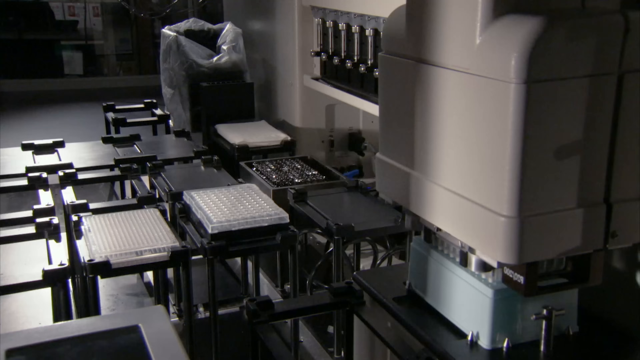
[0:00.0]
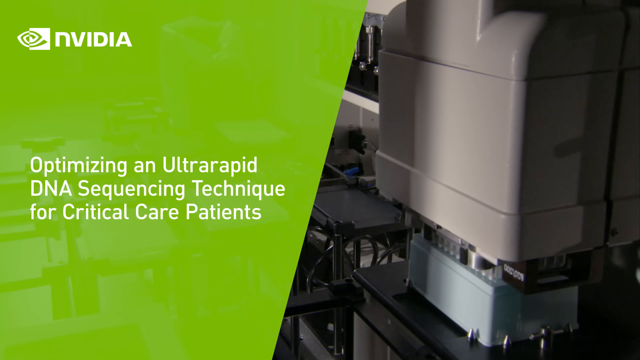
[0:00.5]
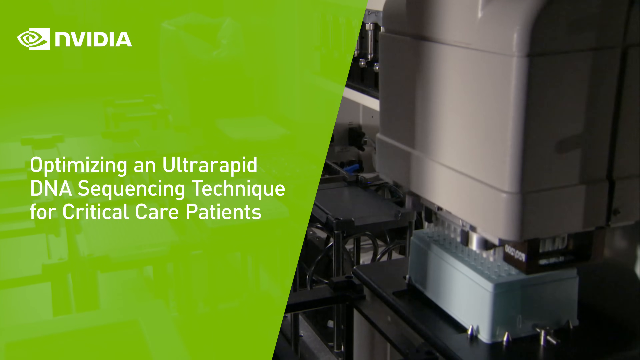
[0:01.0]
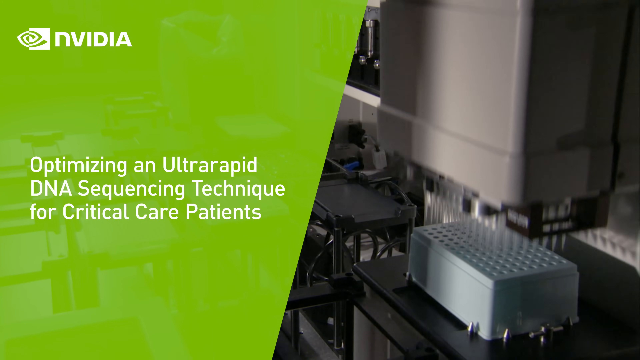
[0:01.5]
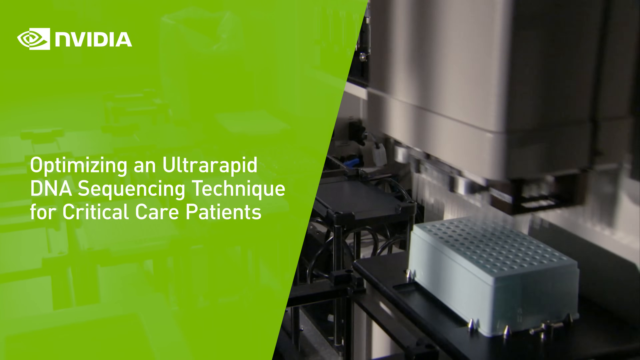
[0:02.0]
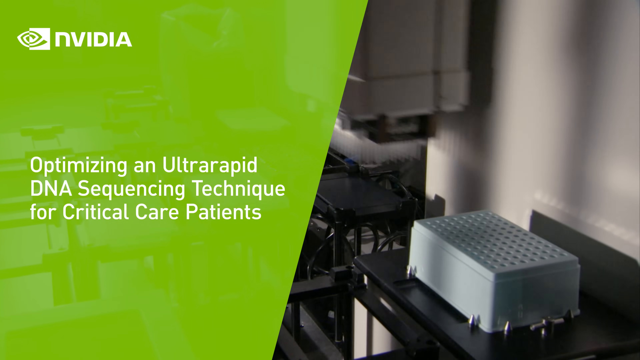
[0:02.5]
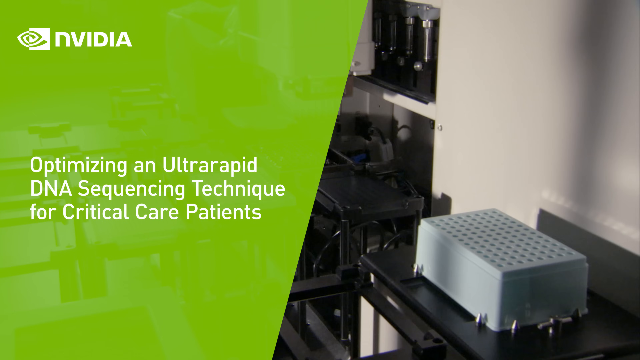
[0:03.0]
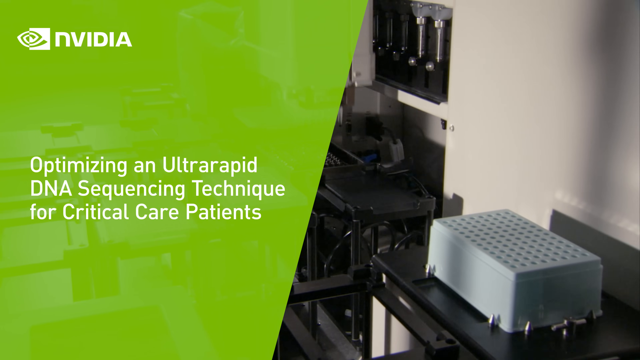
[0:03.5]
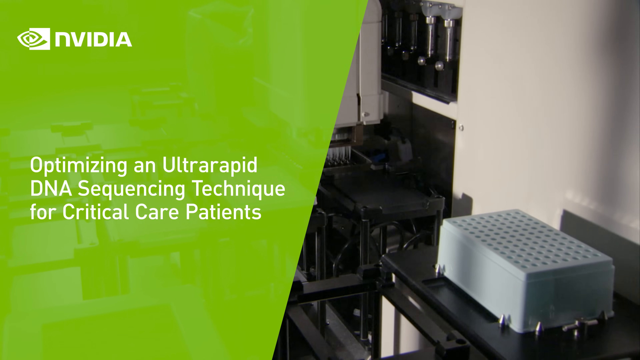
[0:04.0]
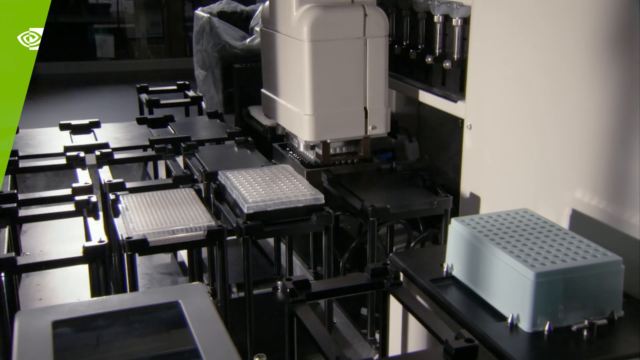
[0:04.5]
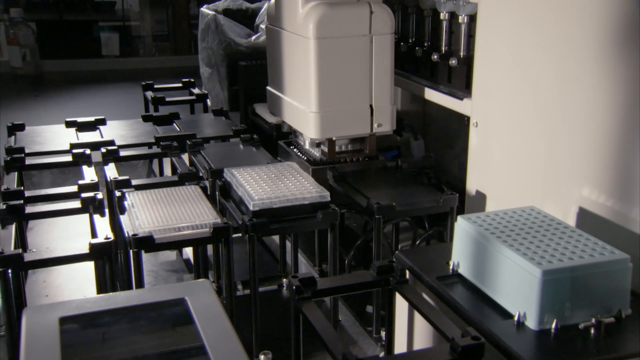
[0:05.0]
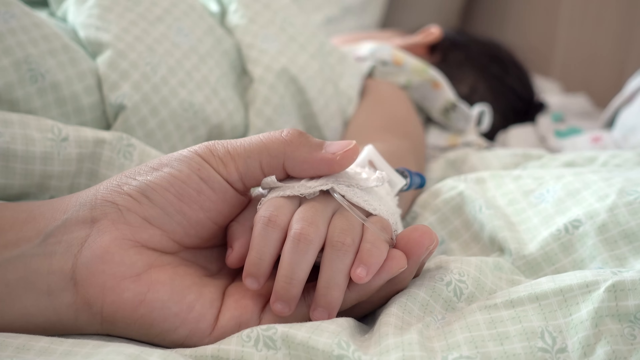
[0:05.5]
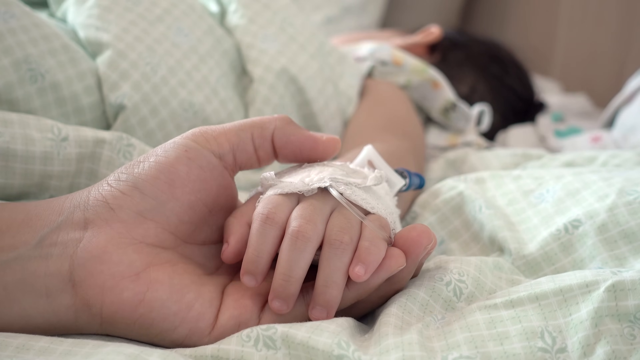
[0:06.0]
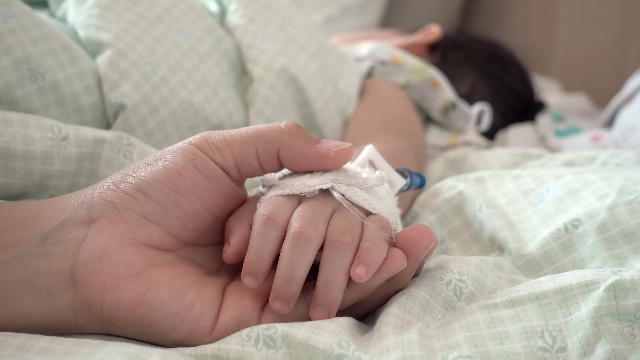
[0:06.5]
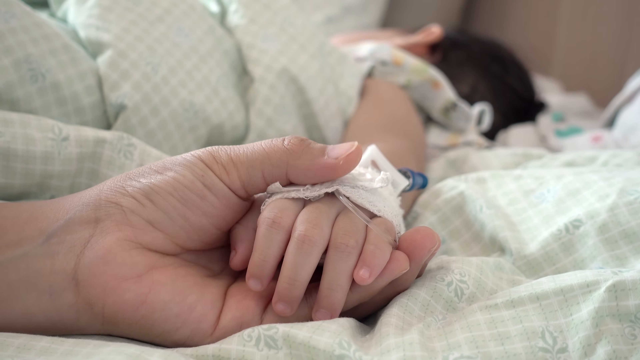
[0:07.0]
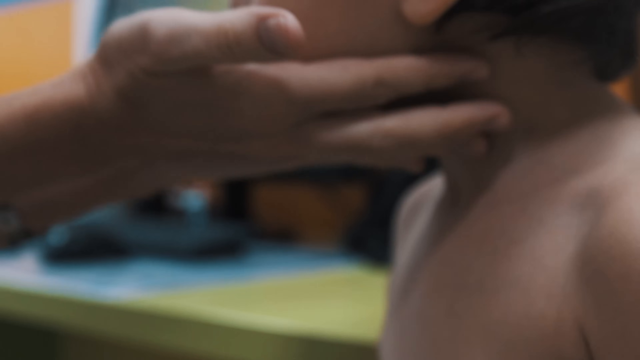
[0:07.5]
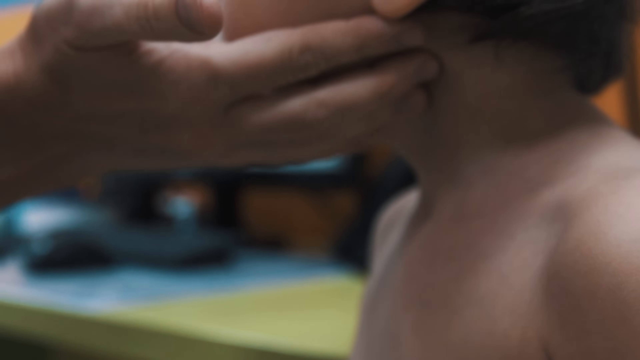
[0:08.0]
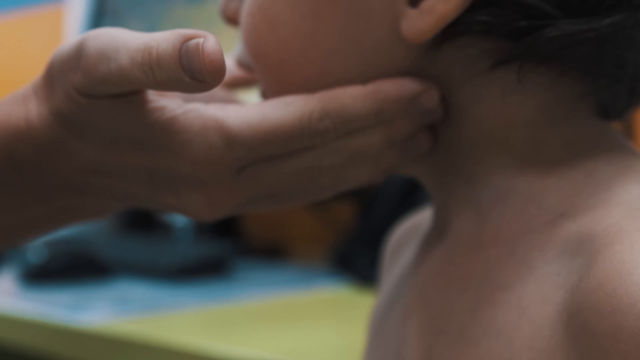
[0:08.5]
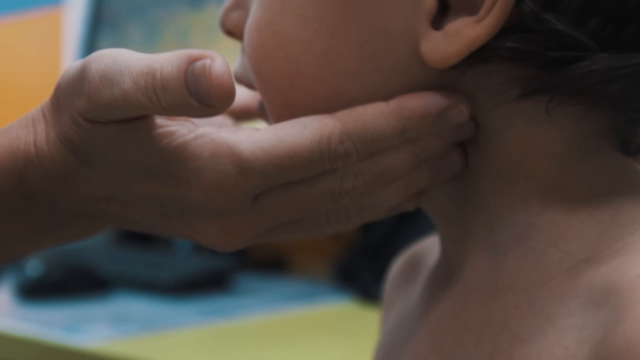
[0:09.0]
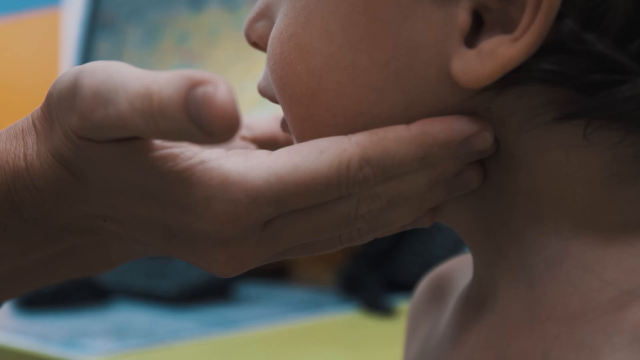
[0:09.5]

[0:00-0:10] A section off to the left reads "NVIDIA Optimizing an Ultrarapid DNA Sequencing Technique for Critical Care Patients." An automated robotic machine fills a bunch of test tubes. A person holds a baby's hand; both the adult and the child appear to be white, and the baby appears to be in the hospital. Another person, probably a doctor, checks the lymph nodes of another child, who appears to be Hispanic. More test tubes in a lab setting are about to be filled by another machine.